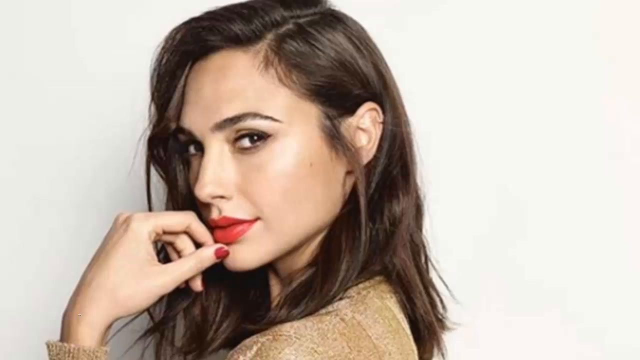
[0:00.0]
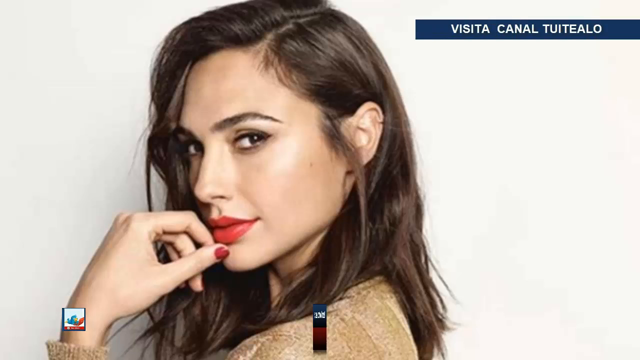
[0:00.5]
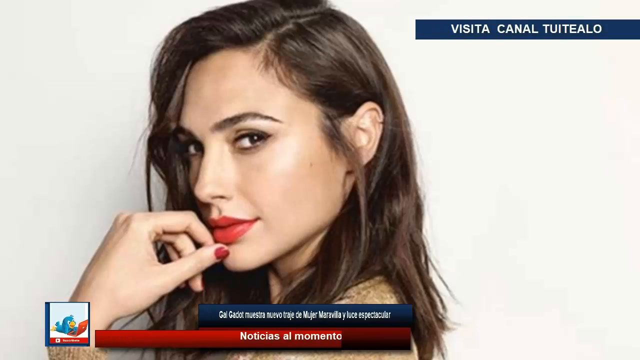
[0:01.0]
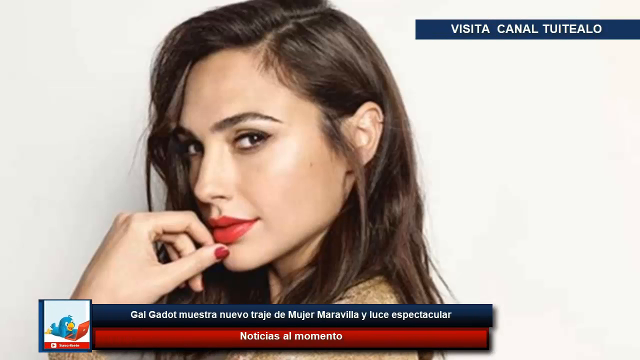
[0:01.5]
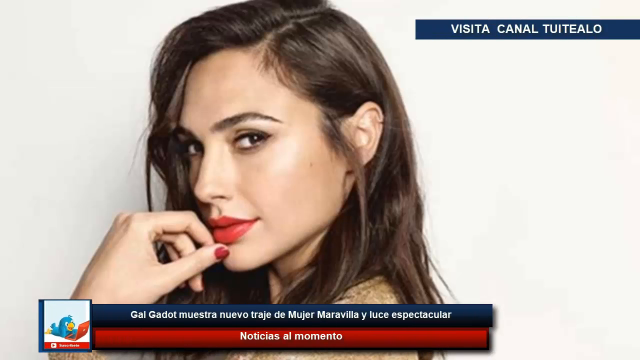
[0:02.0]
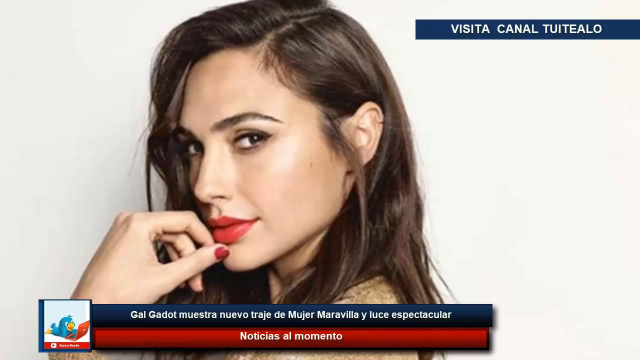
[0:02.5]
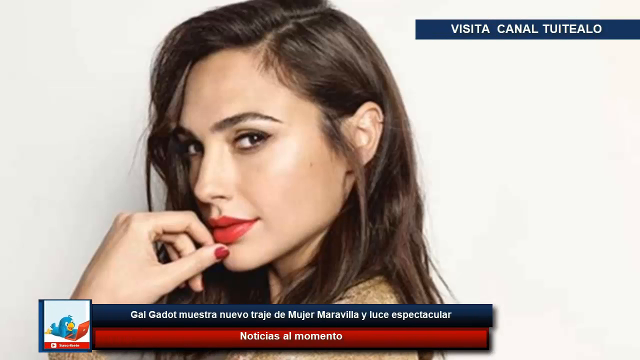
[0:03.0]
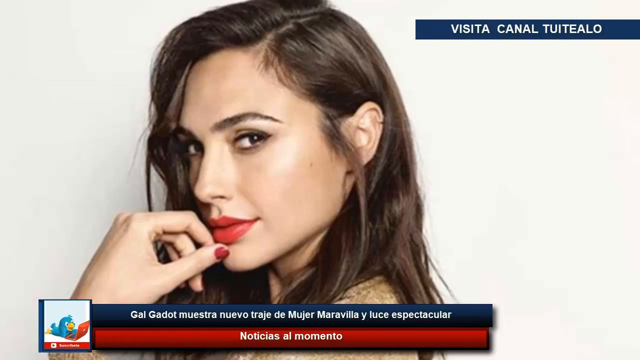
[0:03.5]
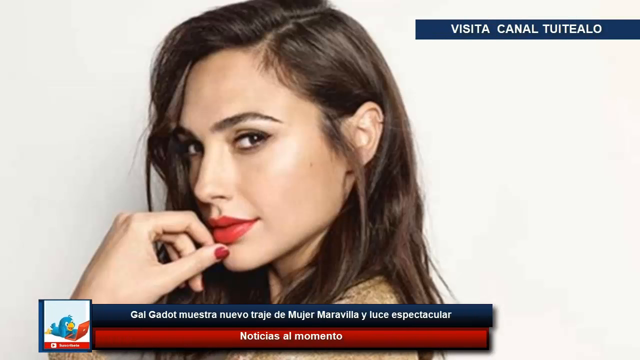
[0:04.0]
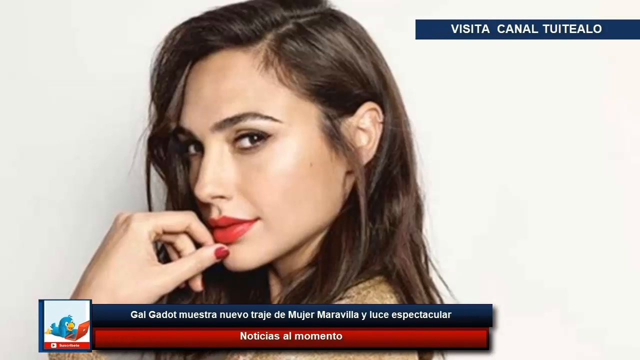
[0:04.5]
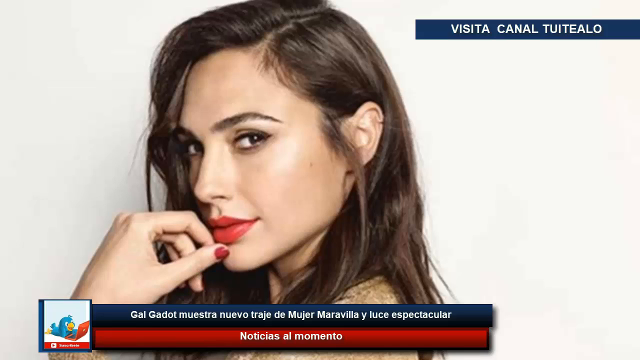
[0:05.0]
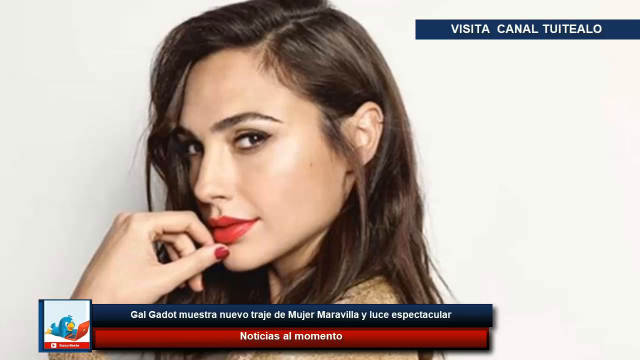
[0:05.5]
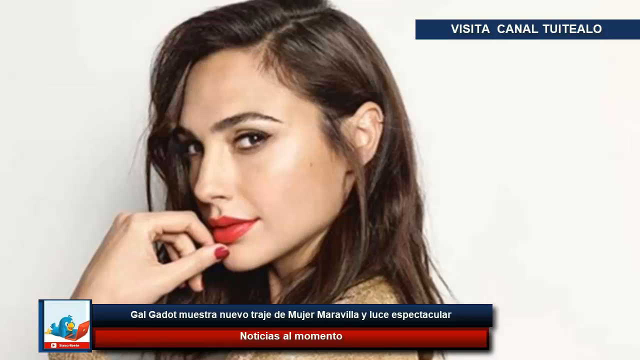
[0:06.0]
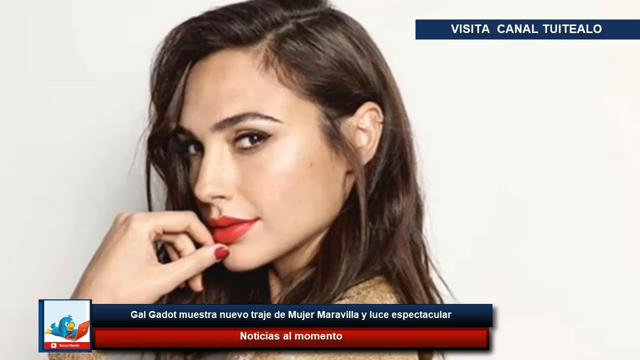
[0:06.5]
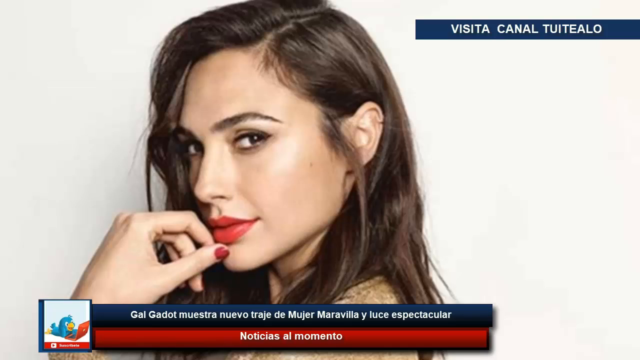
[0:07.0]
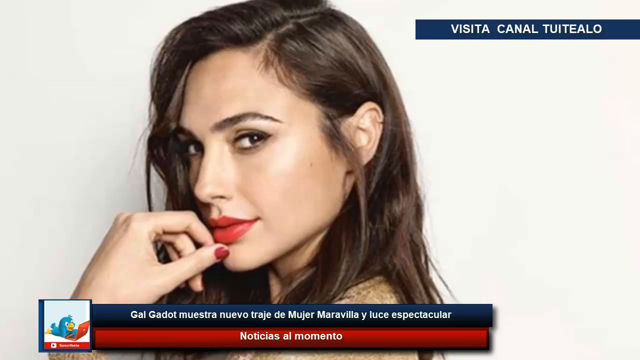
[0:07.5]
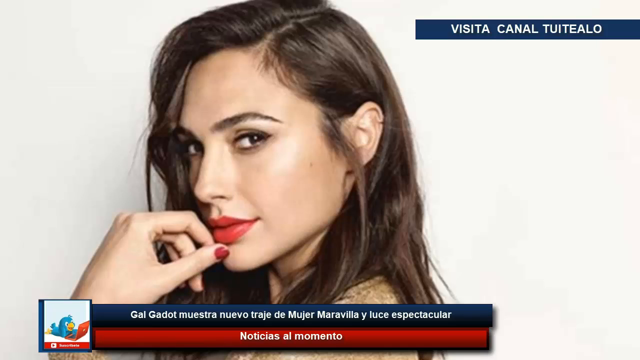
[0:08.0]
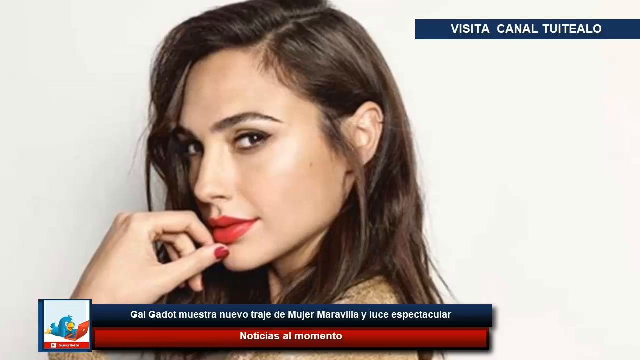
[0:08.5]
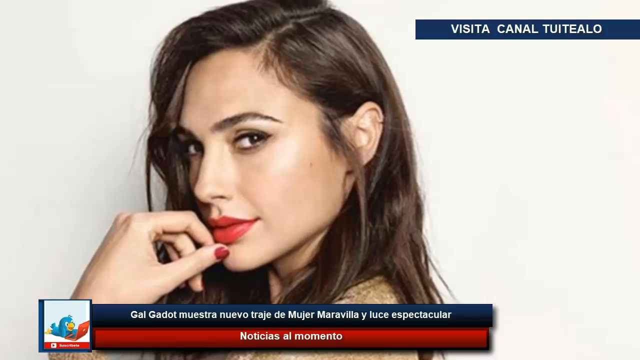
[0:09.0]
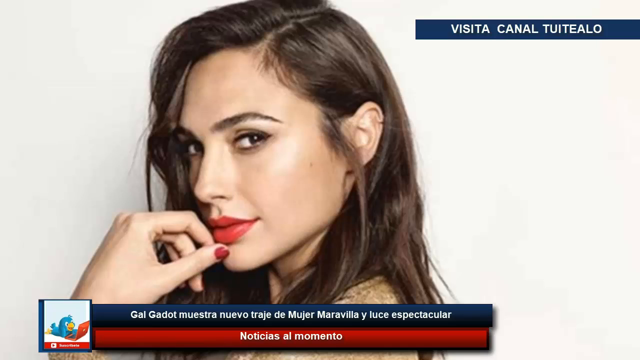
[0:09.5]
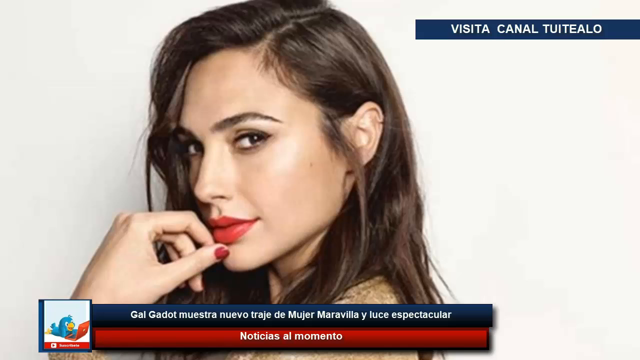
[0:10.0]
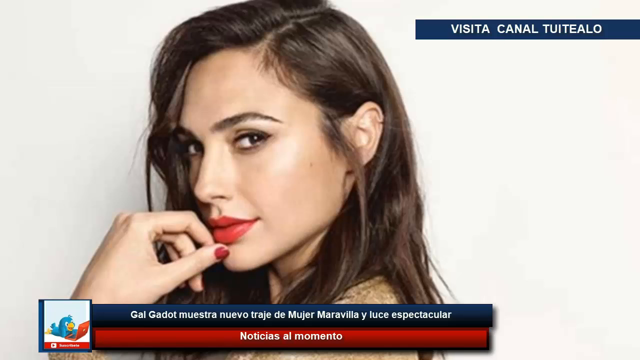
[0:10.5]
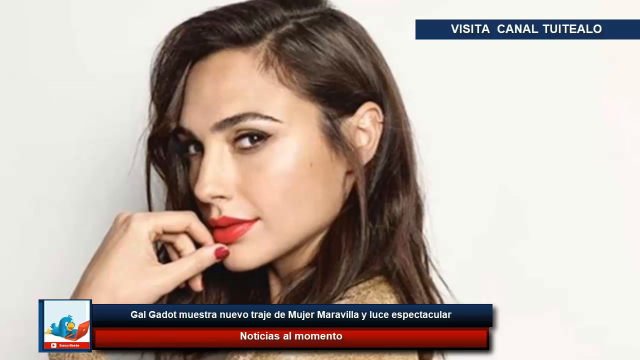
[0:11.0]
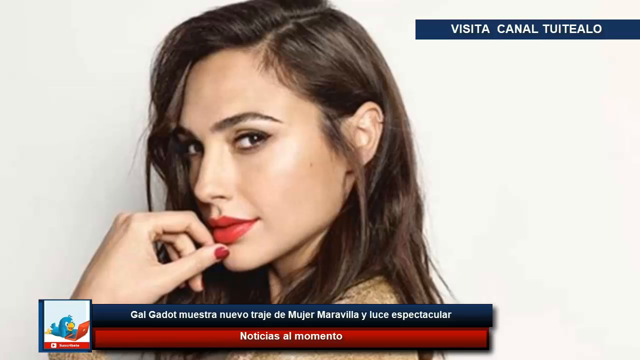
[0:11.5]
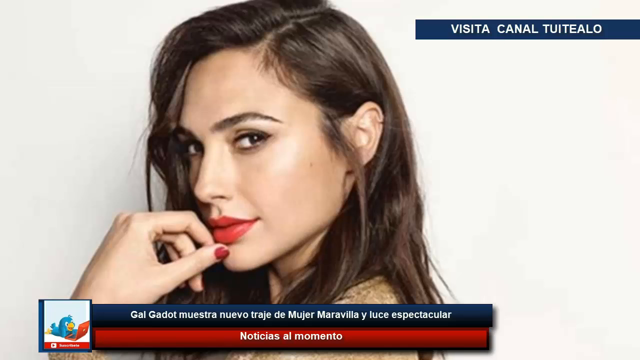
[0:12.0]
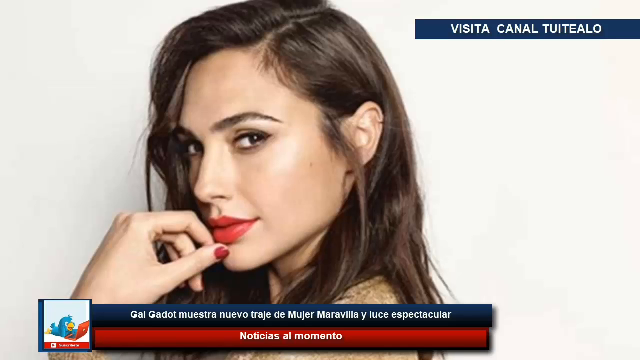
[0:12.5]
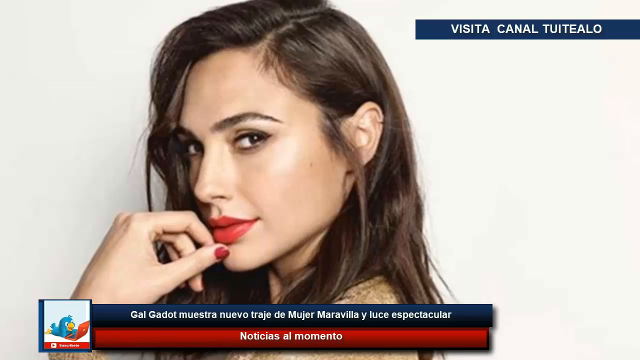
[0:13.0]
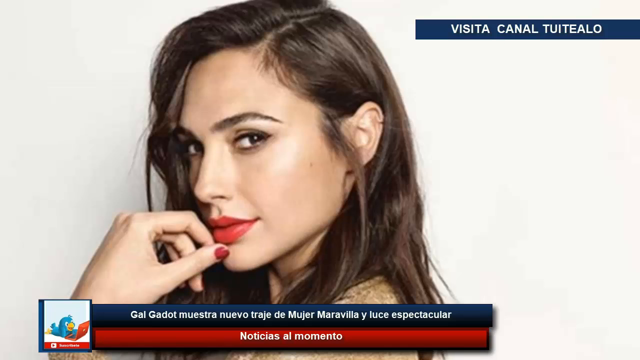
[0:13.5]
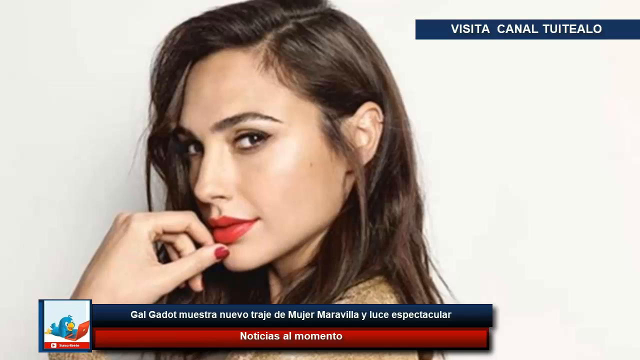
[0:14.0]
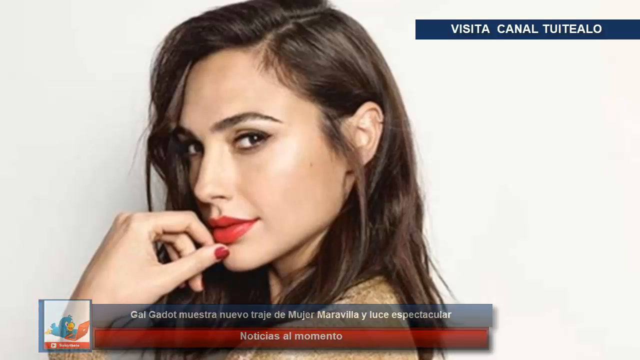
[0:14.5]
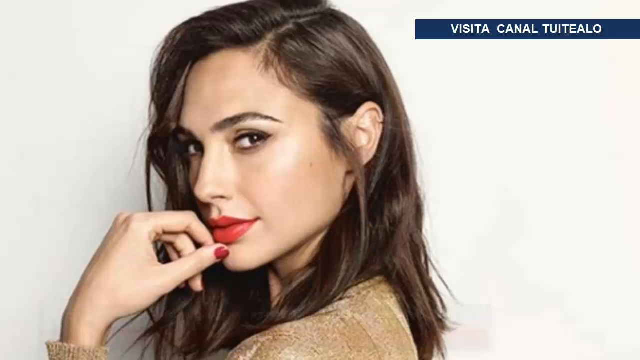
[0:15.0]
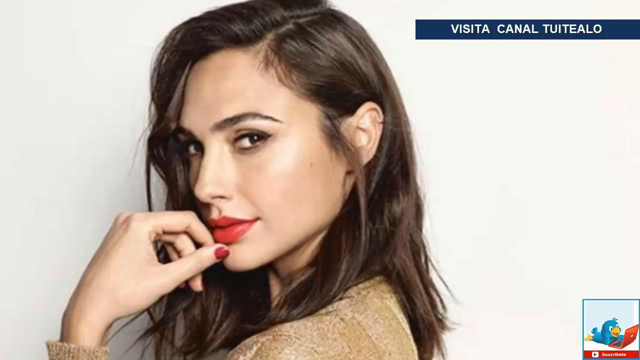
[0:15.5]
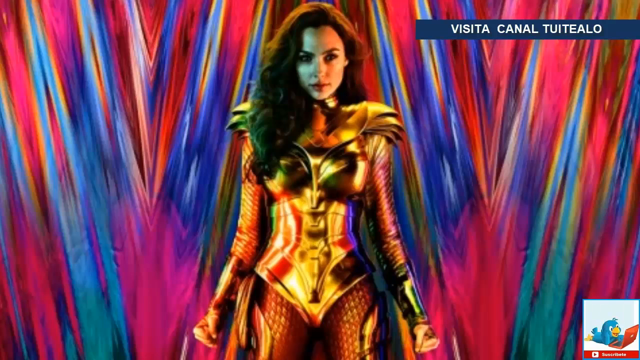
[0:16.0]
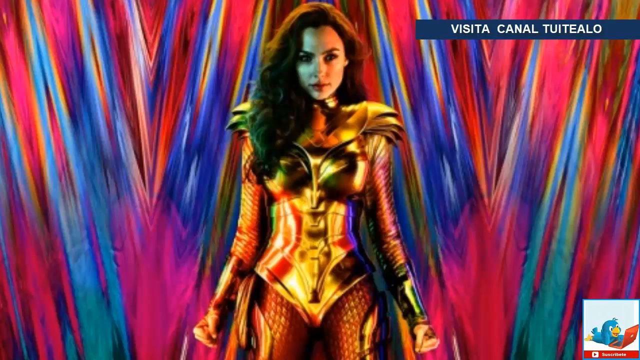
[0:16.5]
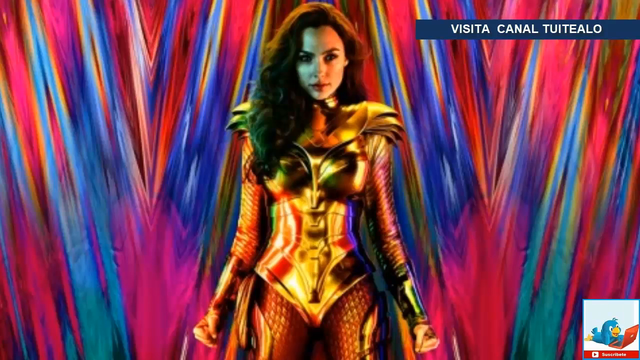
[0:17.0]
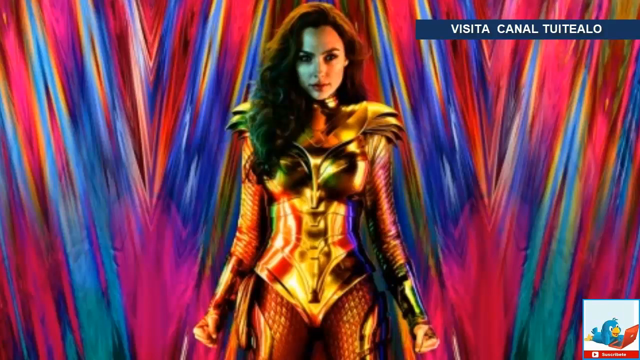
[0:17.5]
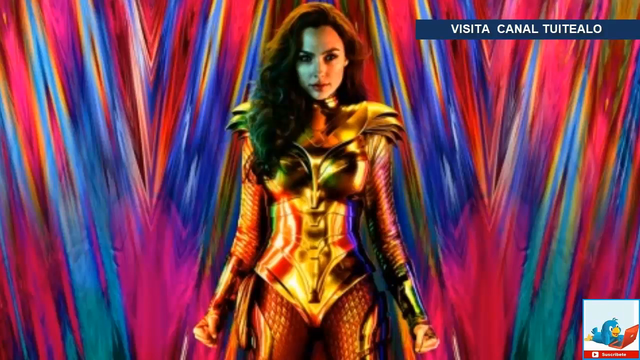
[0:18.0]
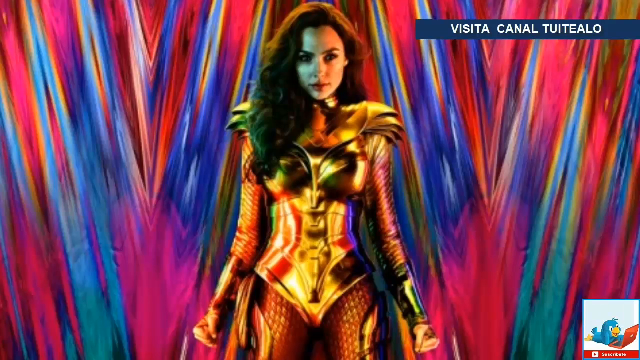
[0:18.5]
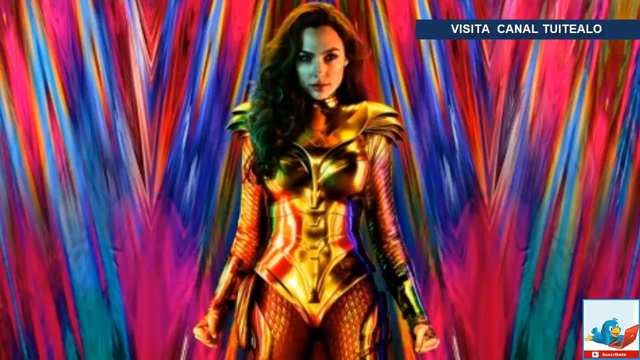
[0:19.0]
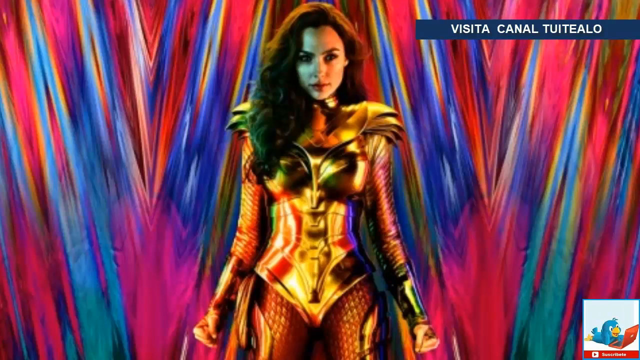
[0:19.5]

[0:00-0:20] A close-up shows a woman with brown hair, dark brown eyebrows, dark eyes and red lips. Her hand is positioned near her mouth in a curved shape, with only one thumb visible, and that thumbnail is painted red. What appears to be Spanish text is at the bottom of the video in a blue box, and right below the blue box is a red box that also has text on it. In the top right corner there is more text in a blue box. All of the text is white. The video then slowly shifts to a new scene featuring the same woman, or a different woman with the same features, wearing a tight gold-colored costume against a background filled with red.